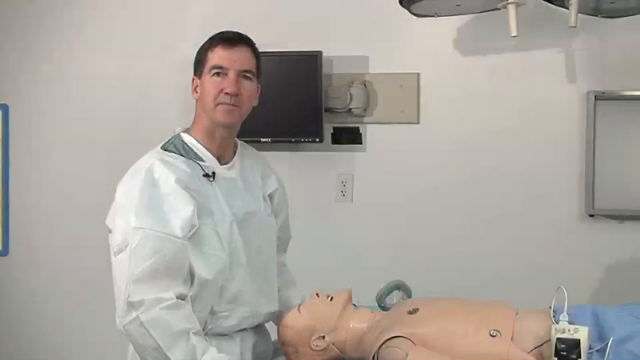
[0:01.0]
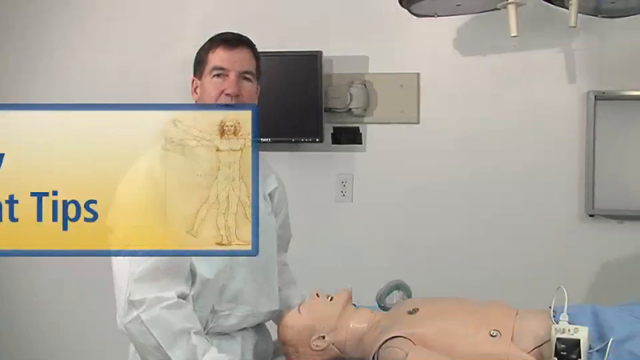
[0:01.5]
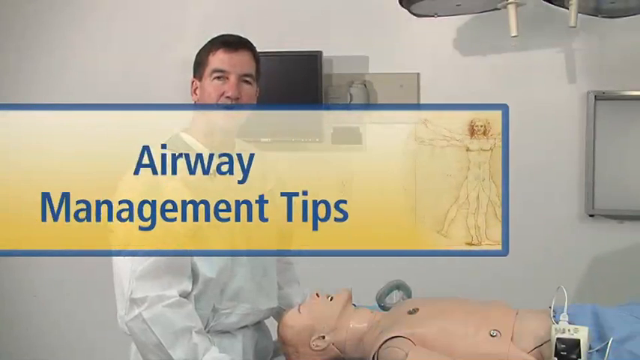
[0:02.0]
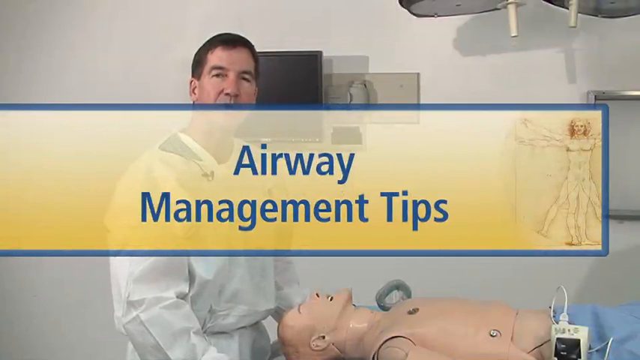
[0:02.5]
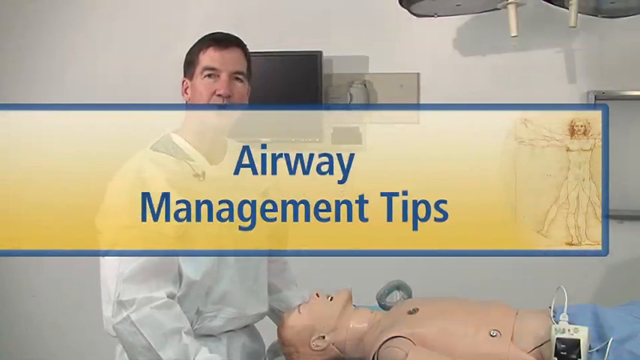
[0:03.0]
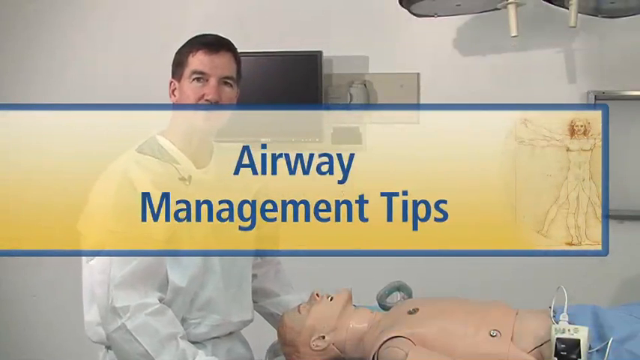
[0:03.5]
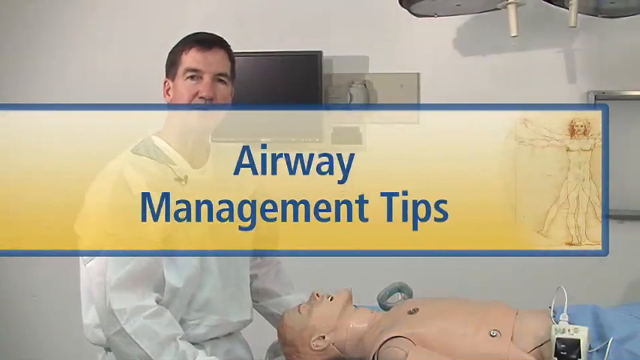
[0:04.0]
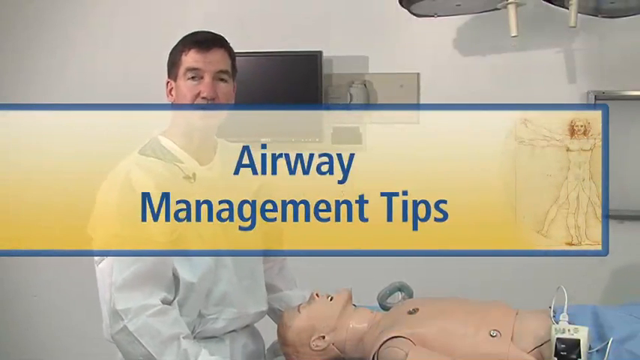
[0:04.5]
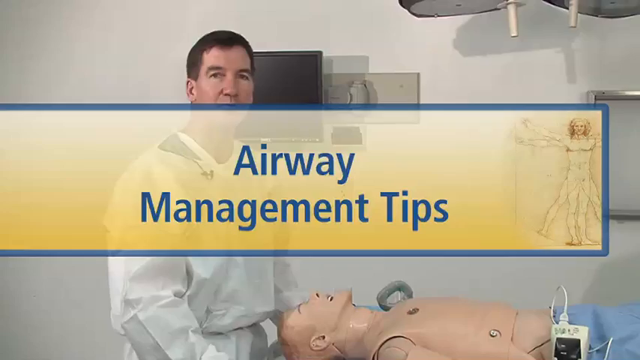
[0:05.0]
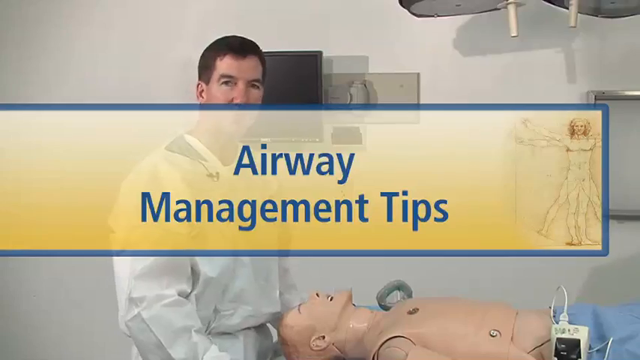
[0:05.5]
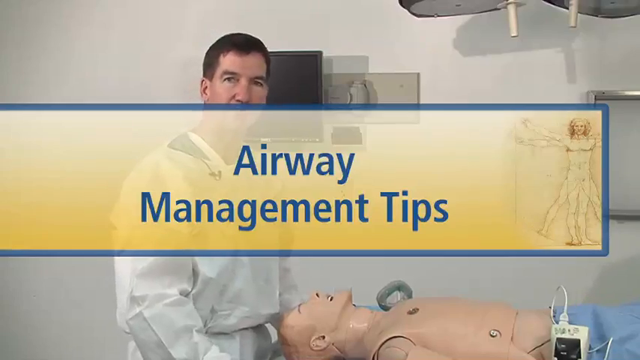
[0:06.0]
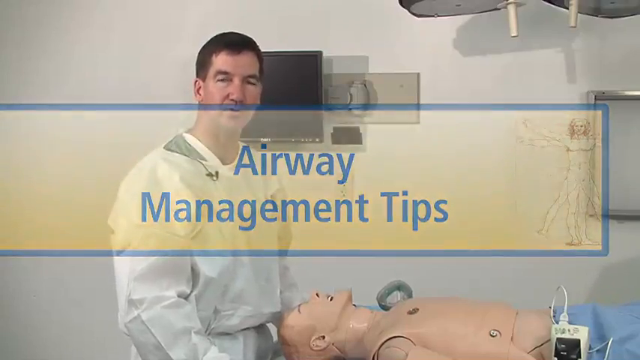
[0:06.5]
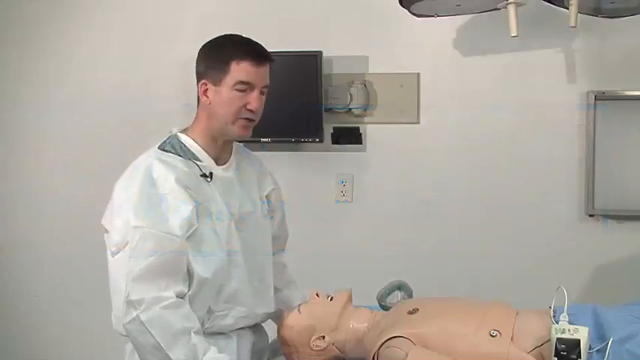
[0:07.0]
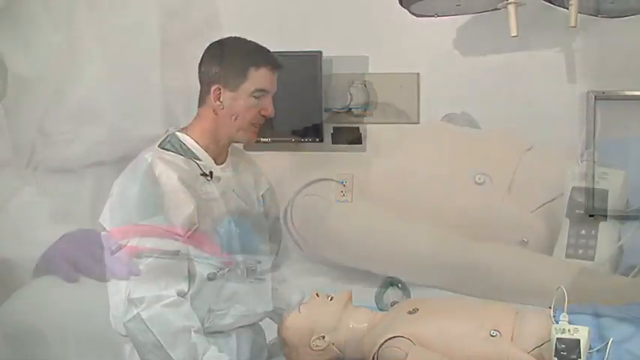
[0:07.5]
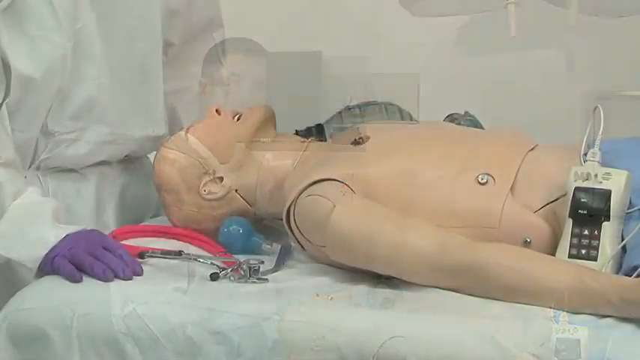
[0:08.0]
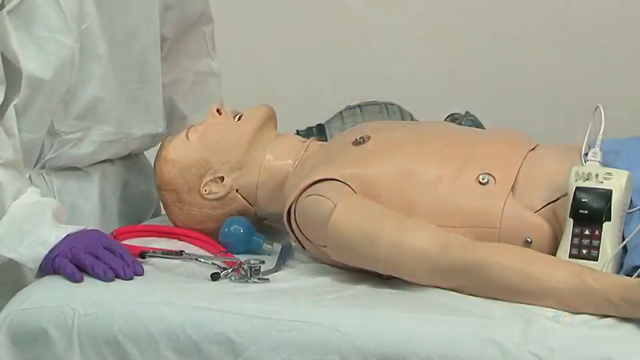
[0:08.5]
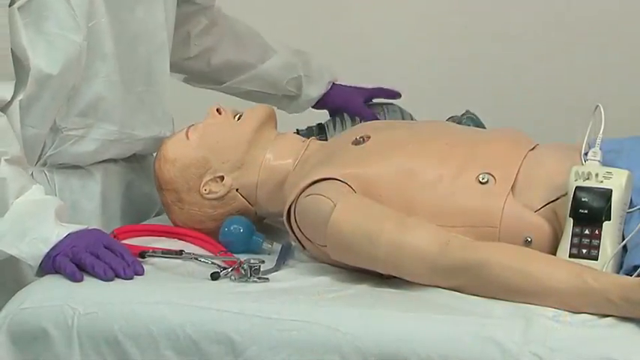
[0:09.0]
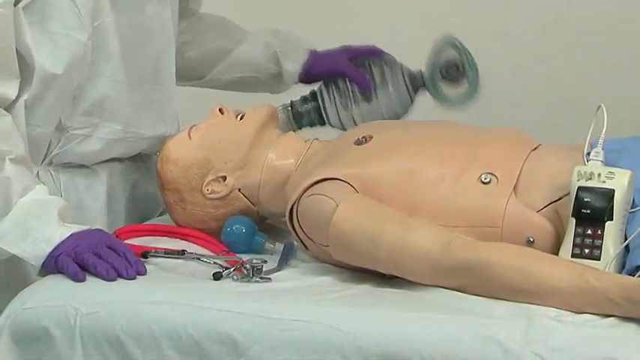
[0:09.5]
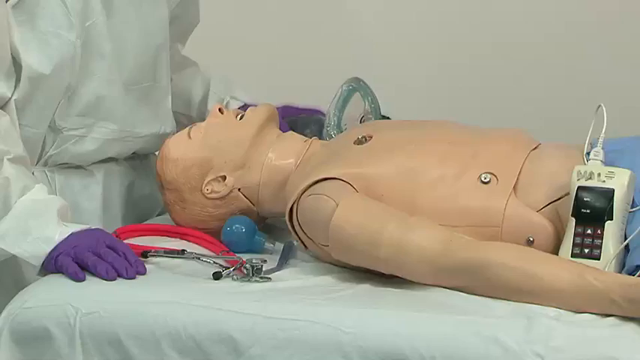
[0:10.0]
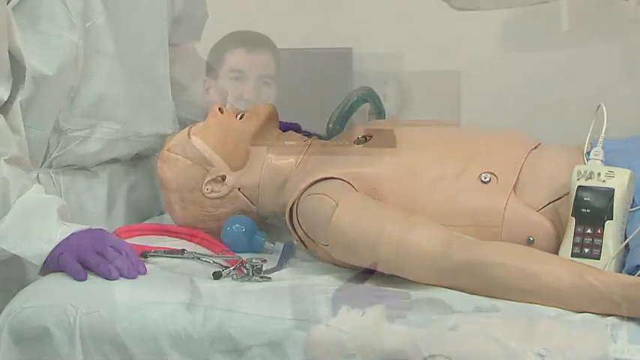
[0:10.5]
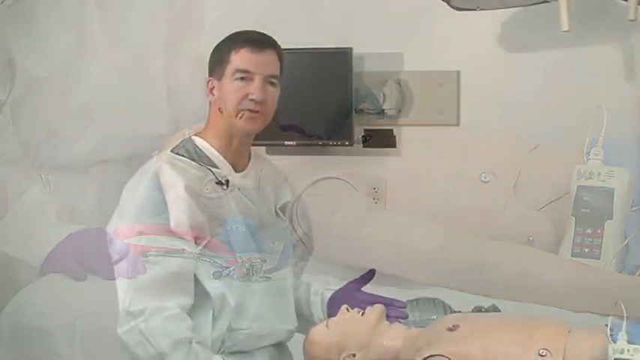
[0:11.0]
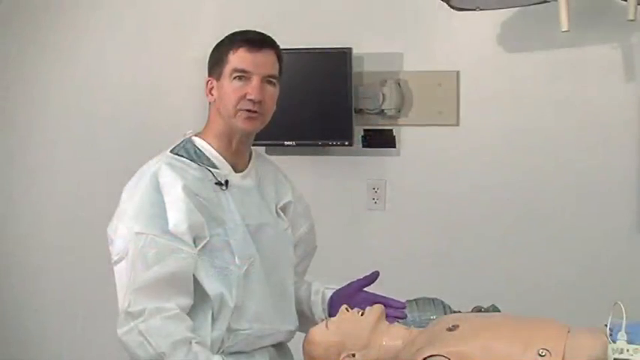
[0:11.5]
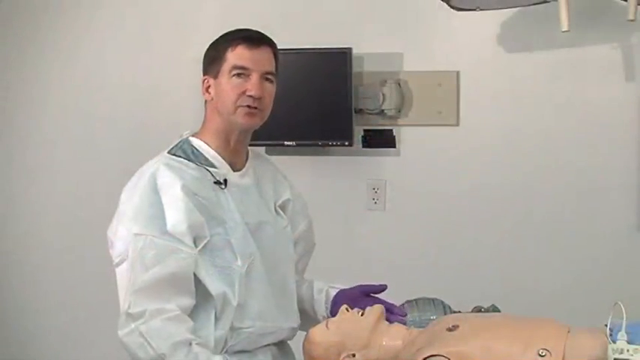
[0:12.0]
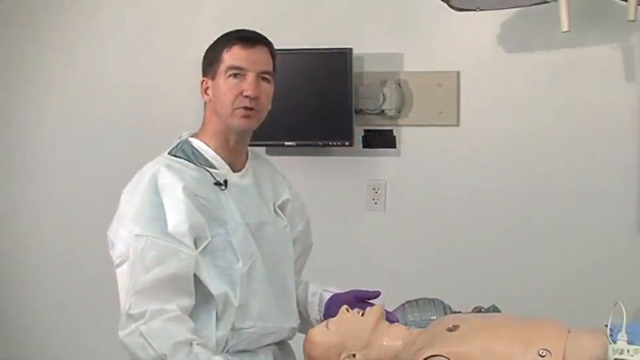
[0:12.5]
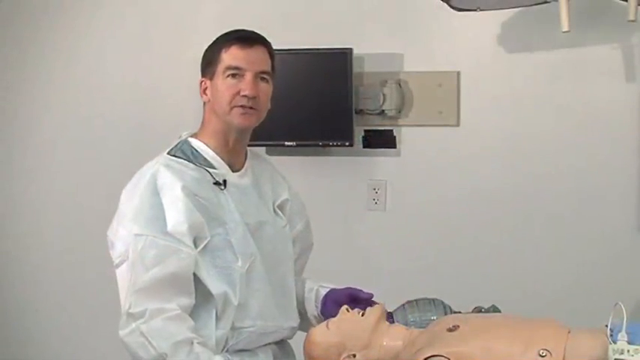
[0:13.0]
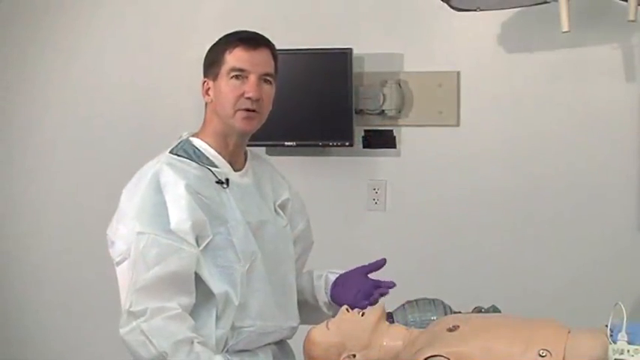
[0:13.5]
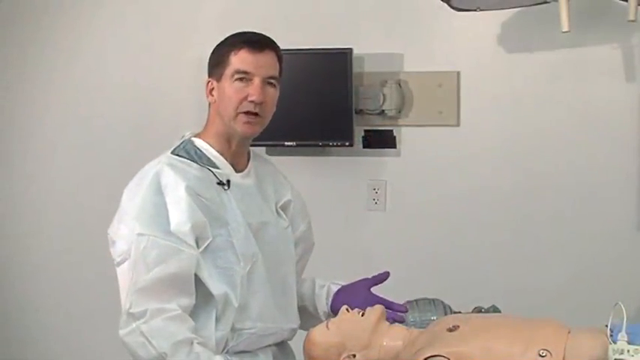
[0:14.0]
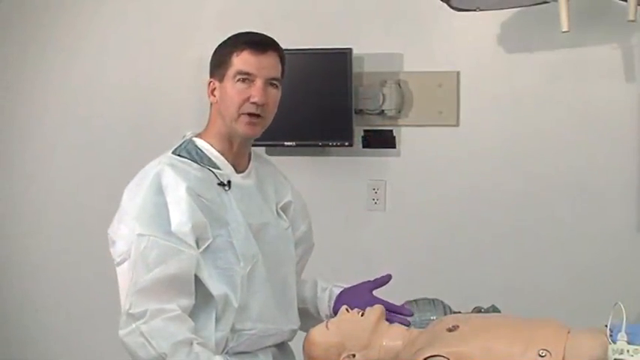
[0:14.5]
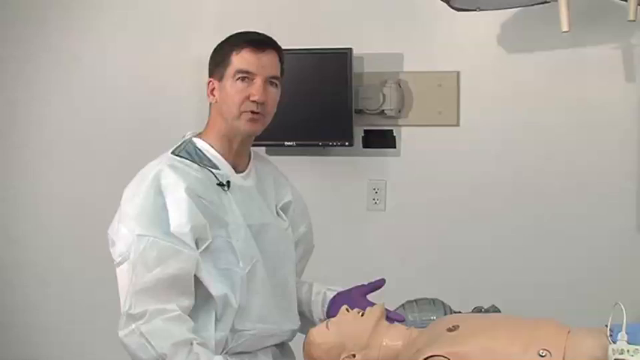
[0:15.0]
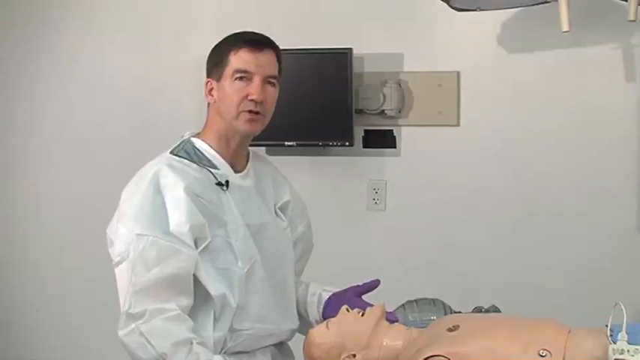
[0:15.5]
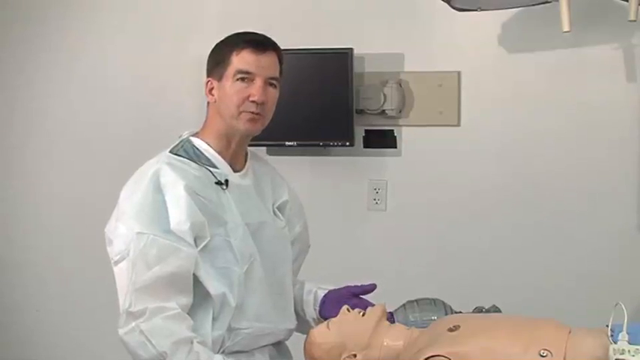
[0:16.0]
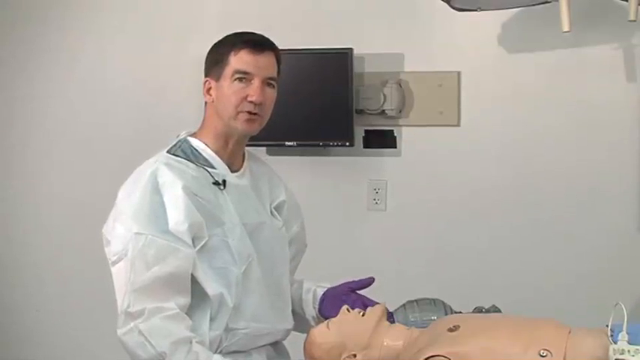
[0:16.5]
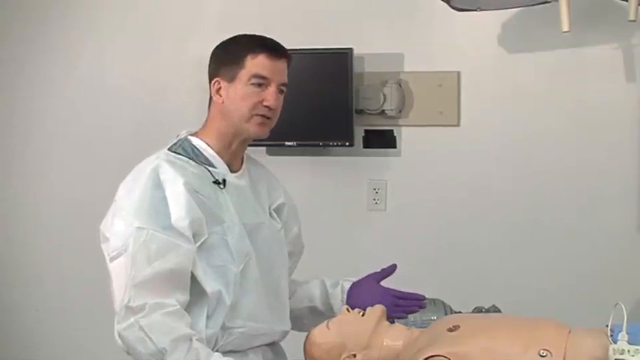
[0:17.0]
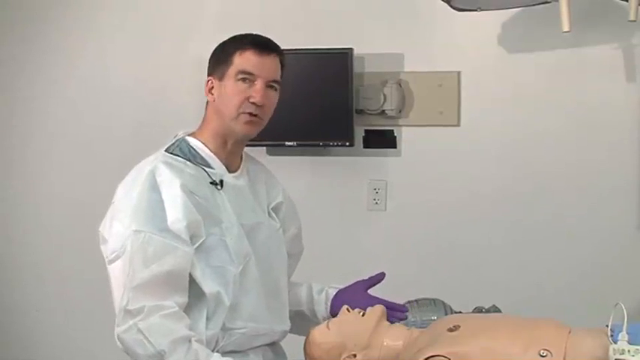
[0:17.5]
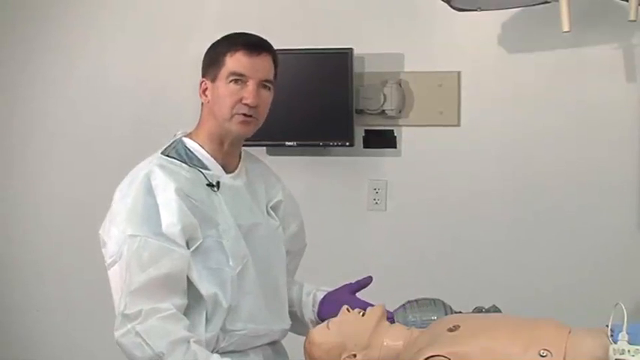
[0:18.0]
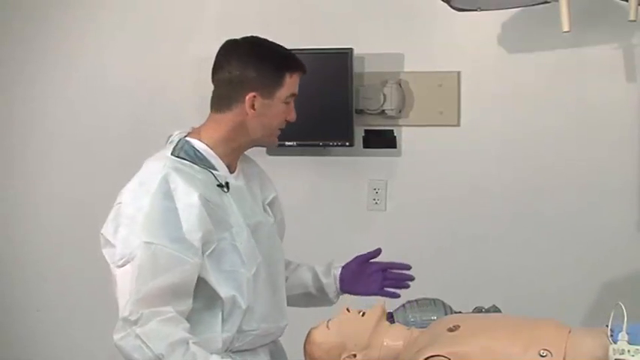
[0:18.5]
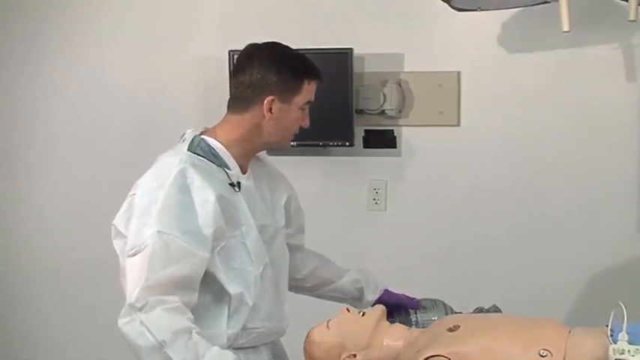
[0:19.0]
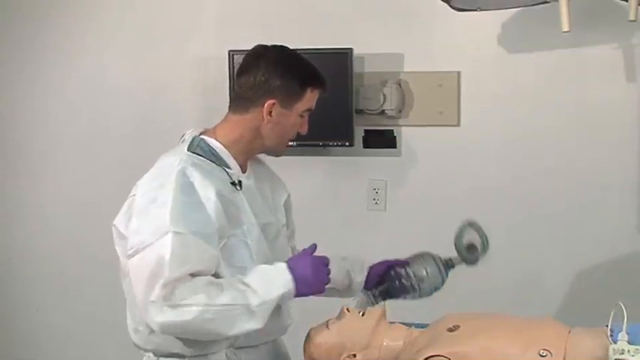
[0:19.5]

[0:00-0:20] A man stands in a room with a dummy, like a mannequin, lying down, and some text pops up. It looks like he is in a medical room. A yellow banner with a blue outline appears with blue text reading "airway management tips," while the man in the background looks at the camera and talks. He looks down at the mannequin, and the shot moves to a close-up of the mannequin. The doctor is wearing purple gloves, and there is medical equipment surrounding him. The mannequin kind of looks like it is lying on a blue light bulb, and there is a red device with some other tools. Some kind of electronic device is lying beside the mannequin as well. He grabs what looks to be a pump and puts it toward the side of the mannequin. The video then transitions back to the doctor, who has his hand up toward the mannequin's face and looks at the camera while talking and explaining something. He looks over toward the pump again, grabs it and picks it up.